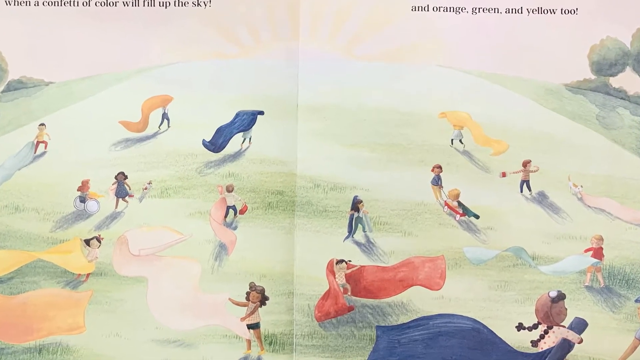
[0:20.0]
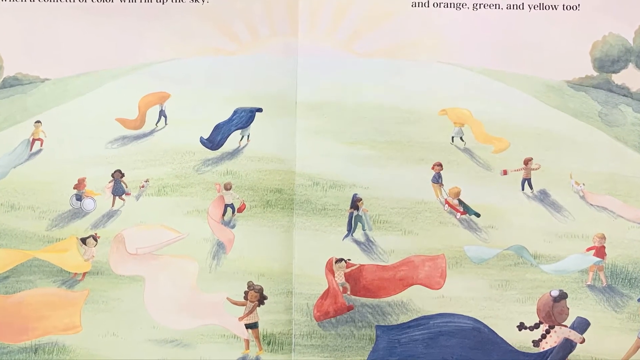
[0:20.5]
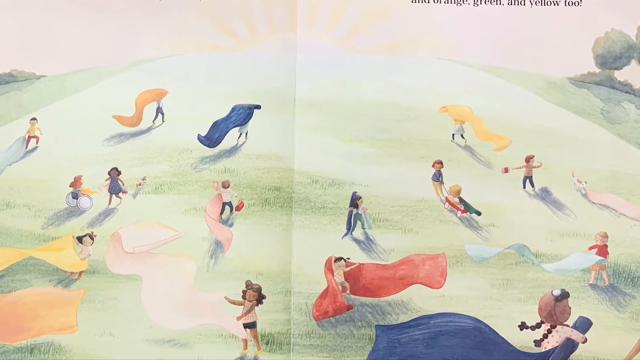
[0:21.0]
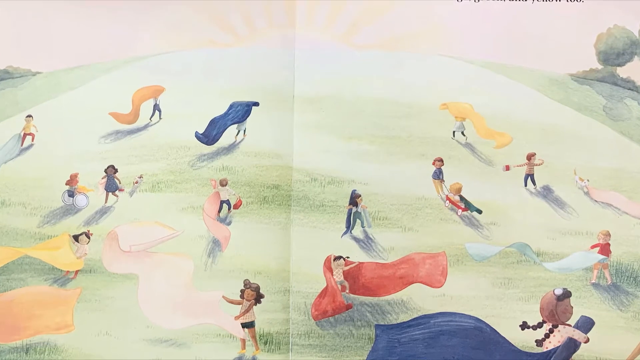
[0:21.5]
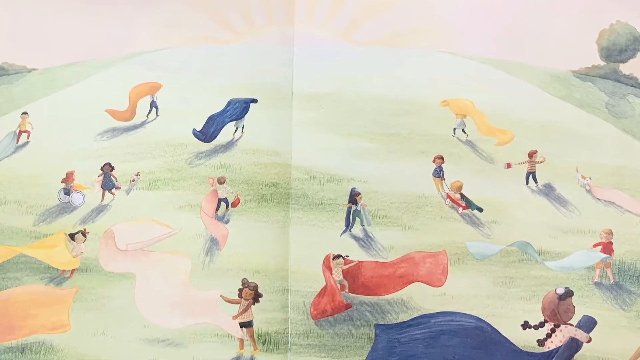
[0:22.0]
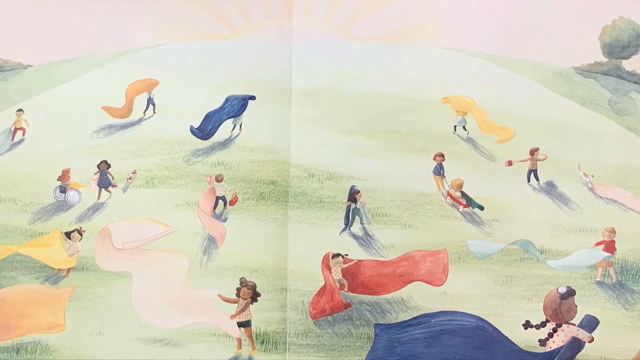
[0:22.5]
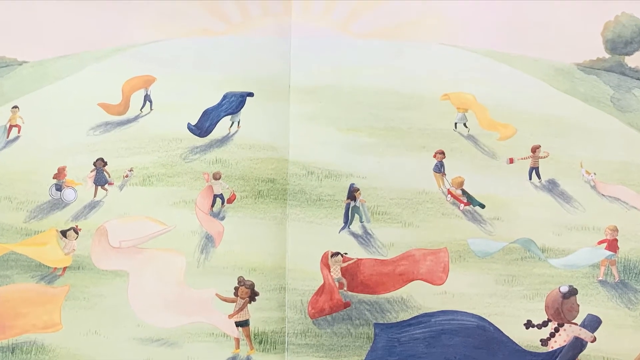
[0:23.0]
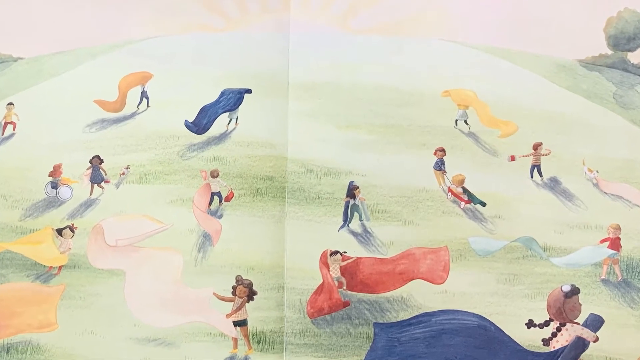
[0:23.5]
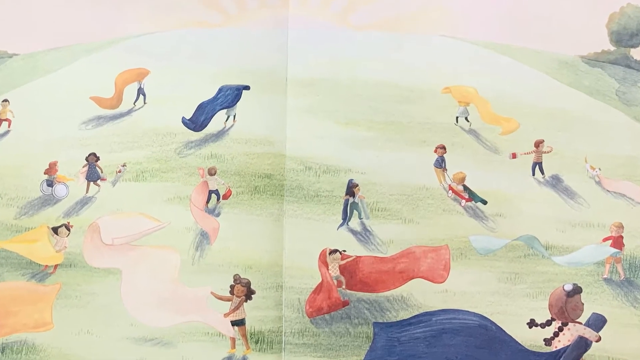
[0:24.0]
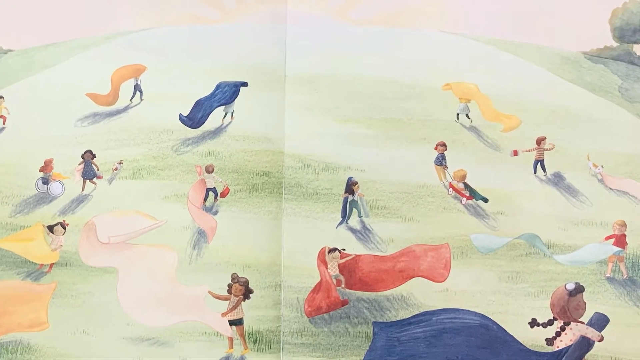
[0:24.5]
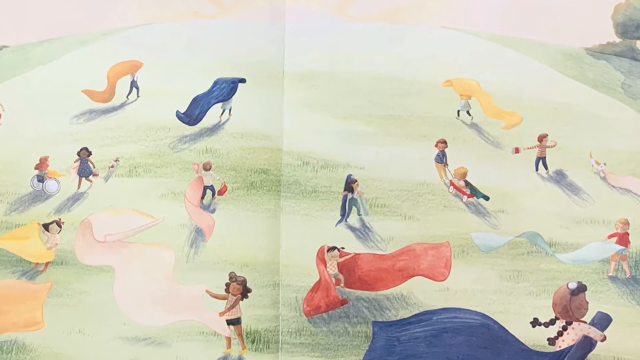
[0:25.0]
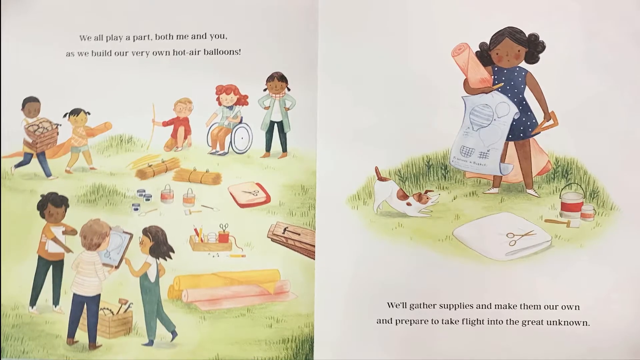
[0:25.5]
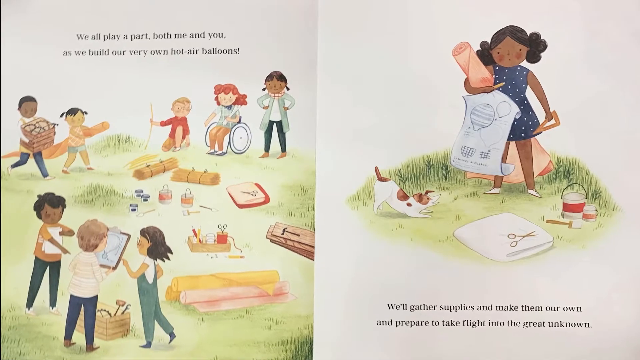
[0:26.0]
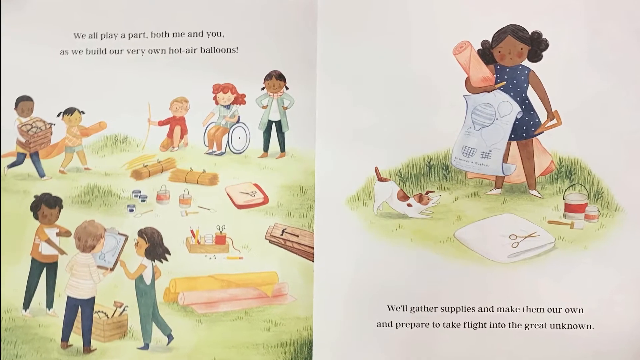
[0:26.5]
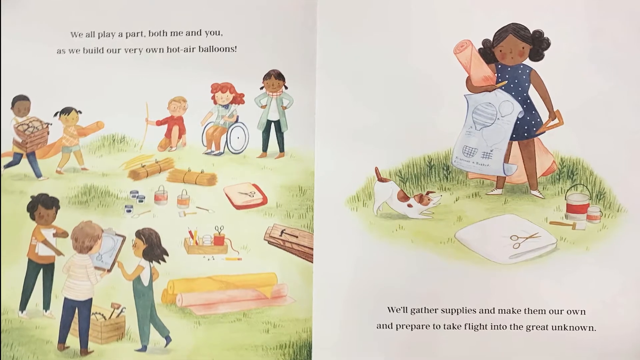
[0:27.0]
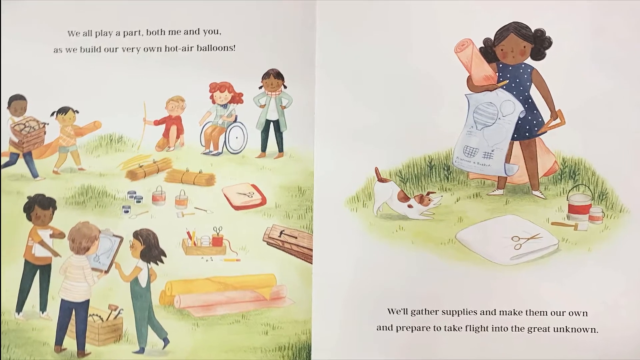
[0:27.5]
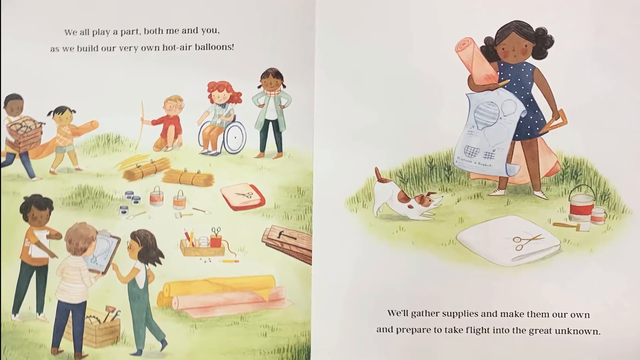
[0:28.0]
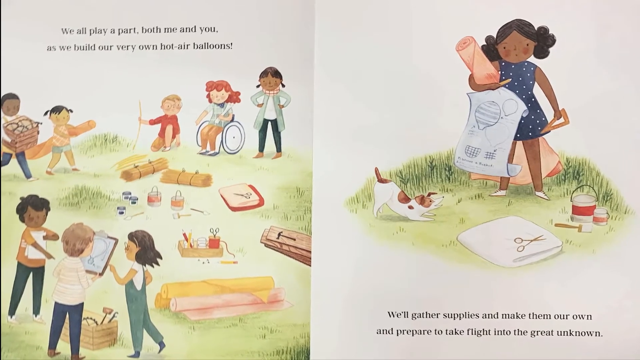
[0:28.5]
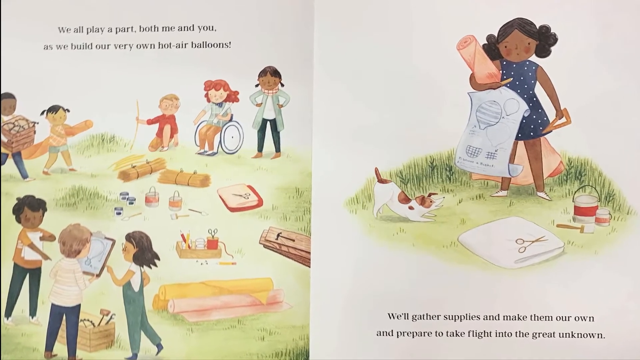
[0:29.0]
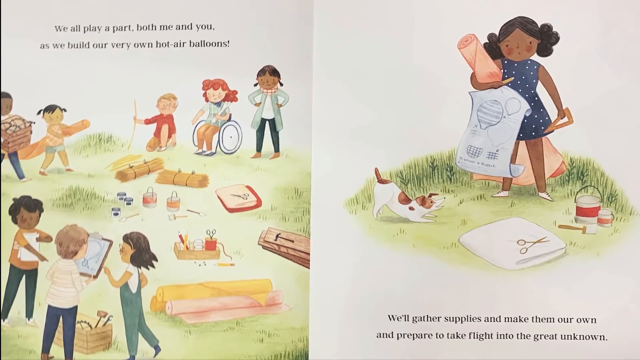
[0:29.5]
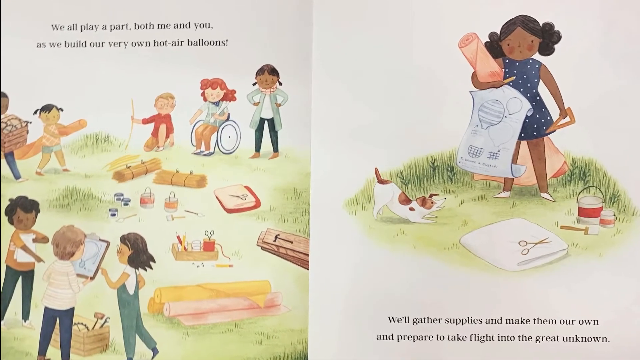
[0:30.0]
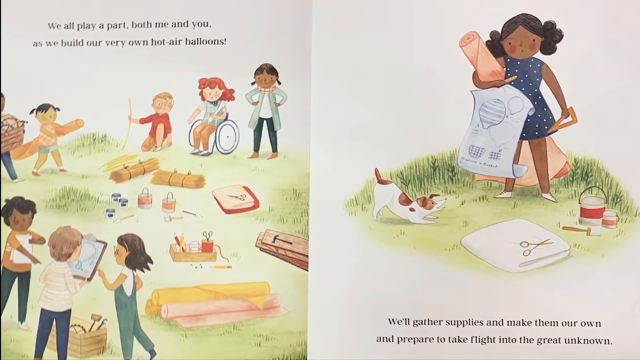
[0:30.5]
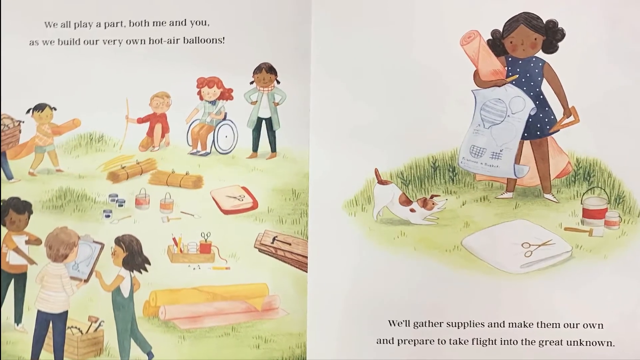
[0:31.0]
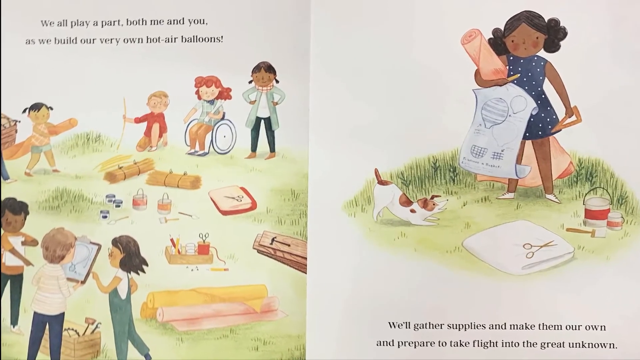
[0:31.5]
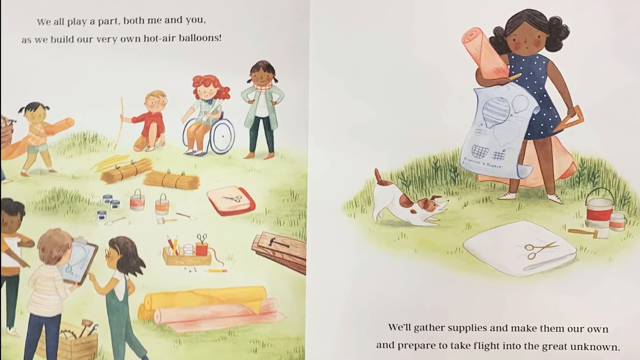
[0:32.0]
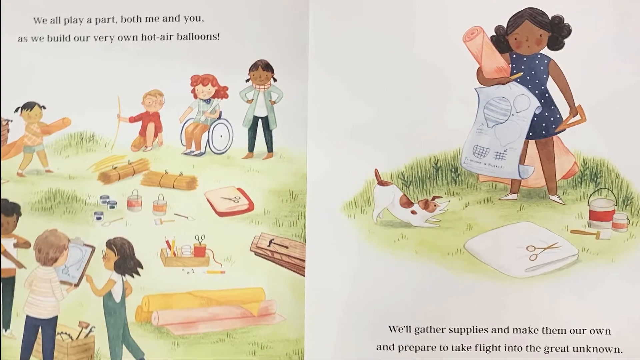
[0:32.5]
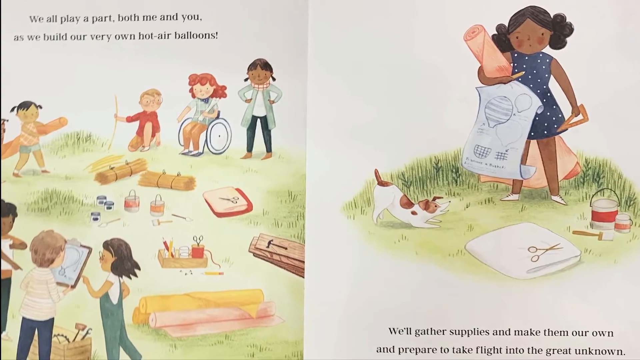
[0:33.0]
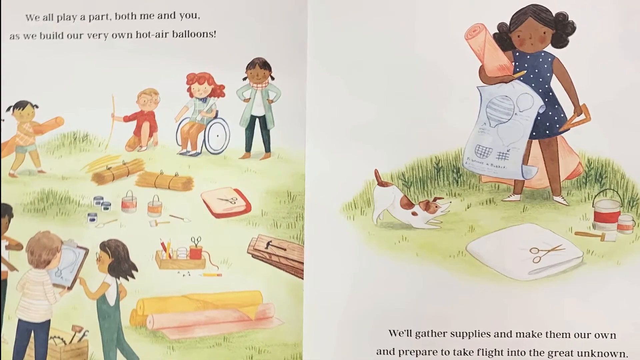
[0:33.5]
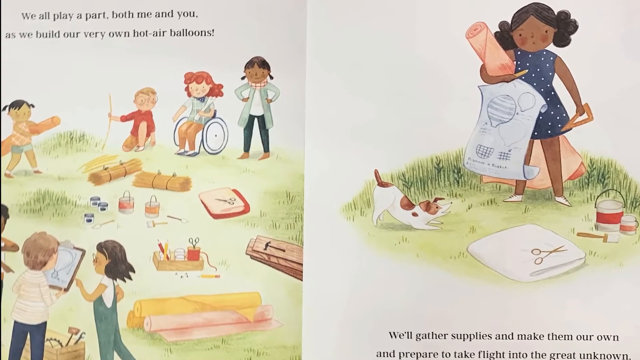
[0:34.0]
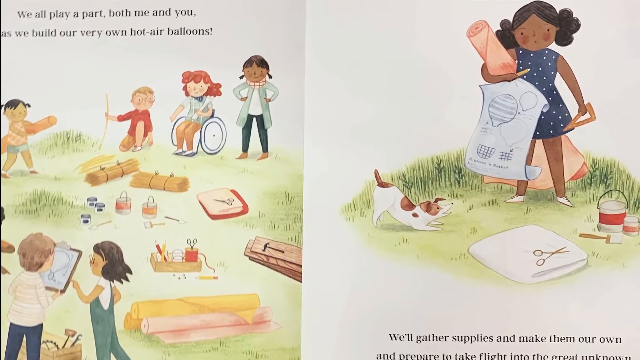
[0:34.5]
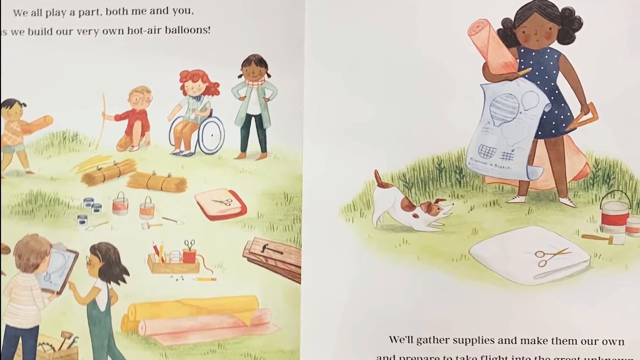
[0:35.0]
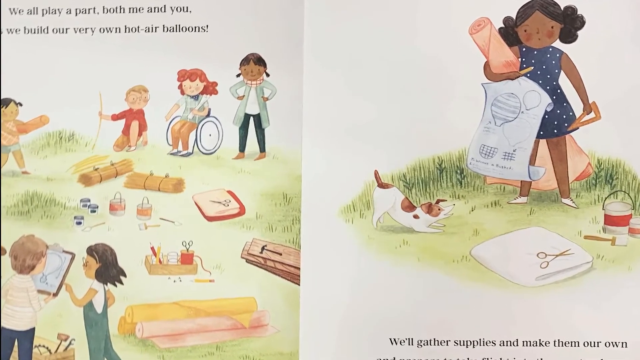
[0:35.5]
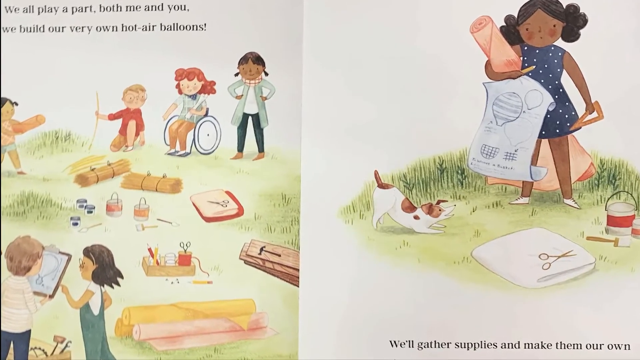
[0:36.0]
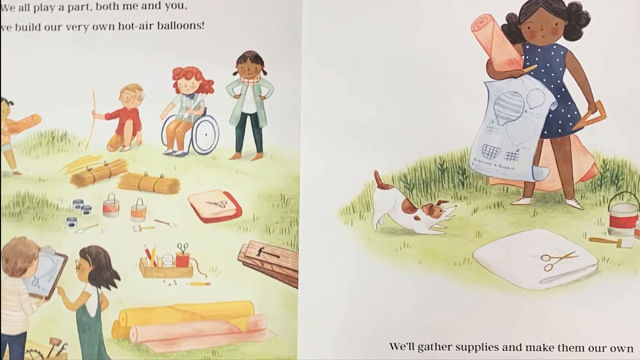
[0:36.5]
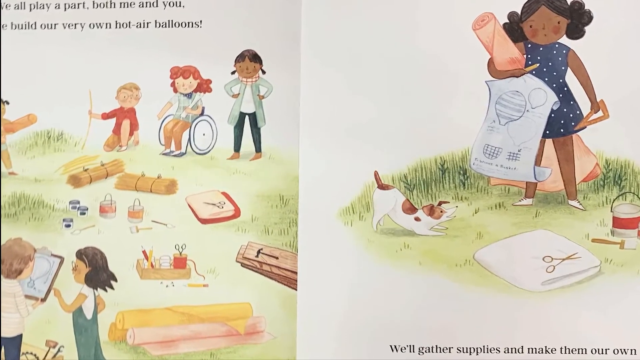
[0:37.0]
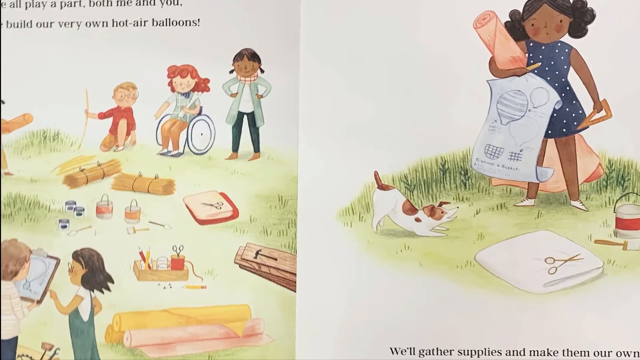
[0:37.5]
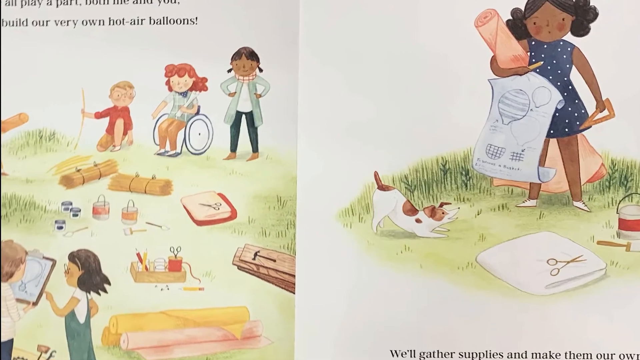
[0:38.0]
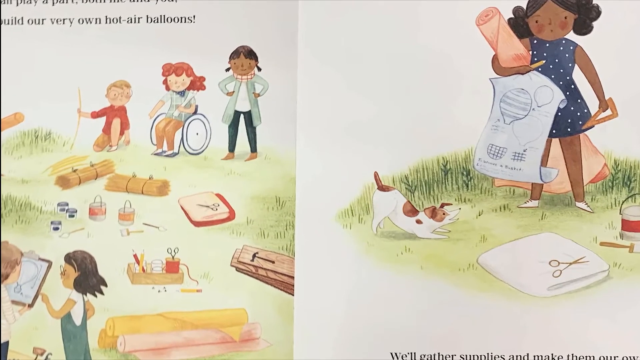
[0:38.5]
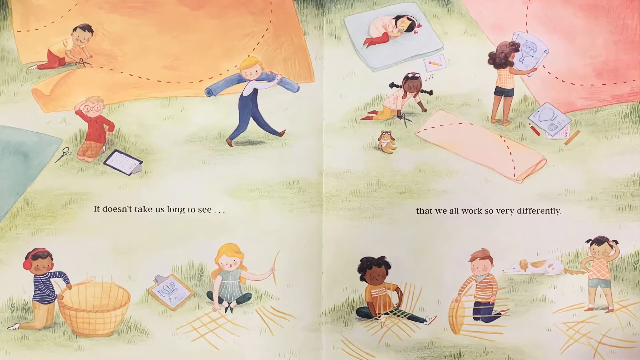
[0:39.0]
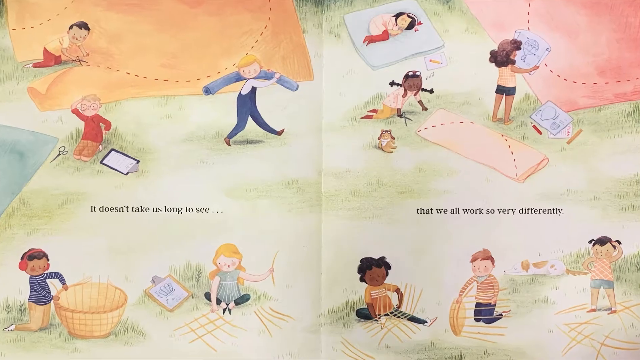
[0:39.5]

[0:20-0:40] The storybook is open on two pages that merge into one scene of a big green grassy hill, with possibly a sun at the top. There is writing at the top of the spread and lots of trees on both the left and right sides. Many small figures, presumably children, play together or alone, and most of them carry sheets or rugs in shades of navy blue, orange, yellow, red and white. One of the children is in a wheelchair, and the children are of different ethnicities. The book then turns to the next page. On the left-hand page, lots of children seem to be coming together, possibly for a picnic or some kind of crafting, carrying different things: some carry pictures and some carry equipment for making a hot air balloon. On the right is a child with an image of a hot air balloon and the materials needed to make one.